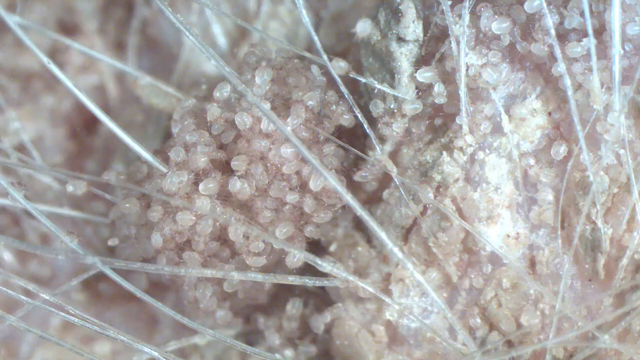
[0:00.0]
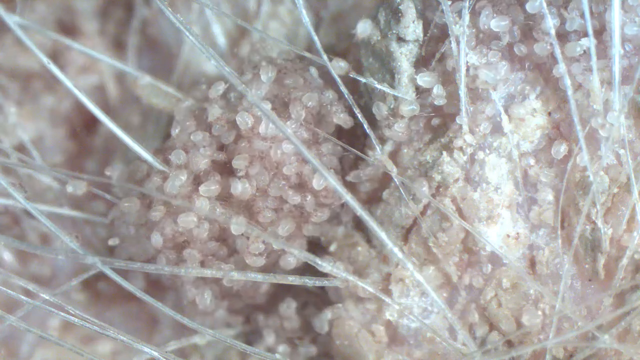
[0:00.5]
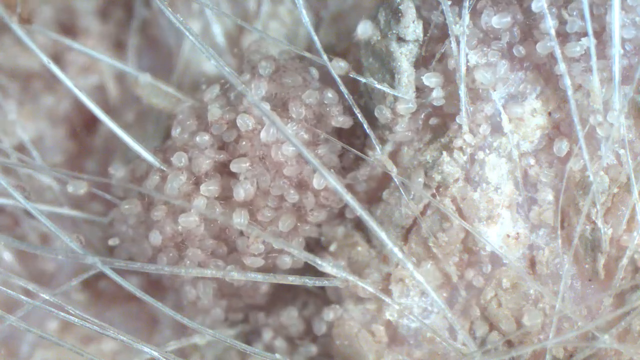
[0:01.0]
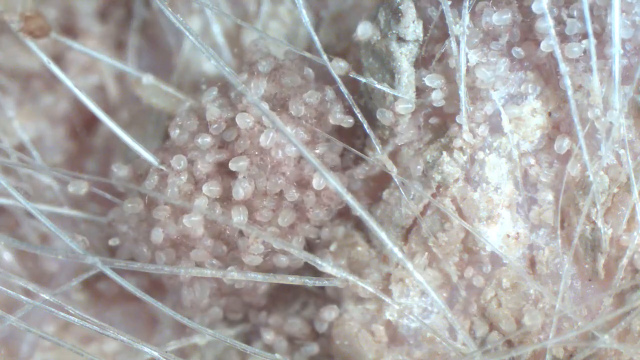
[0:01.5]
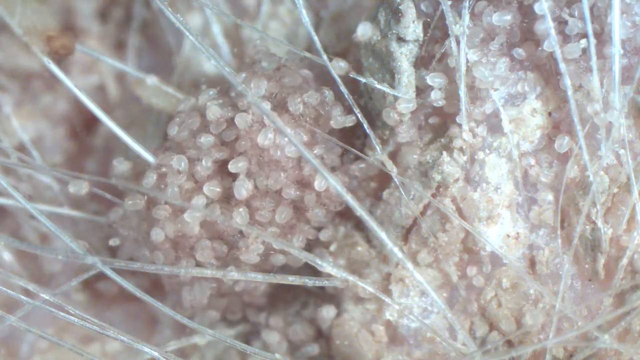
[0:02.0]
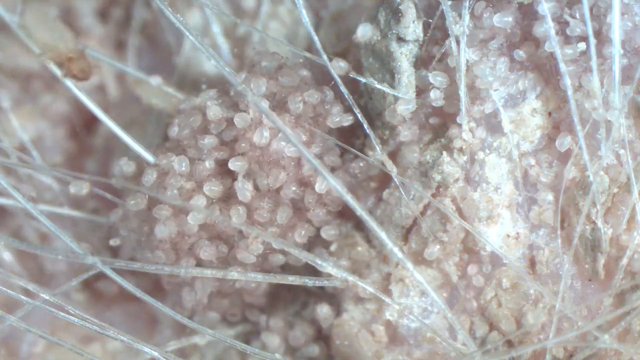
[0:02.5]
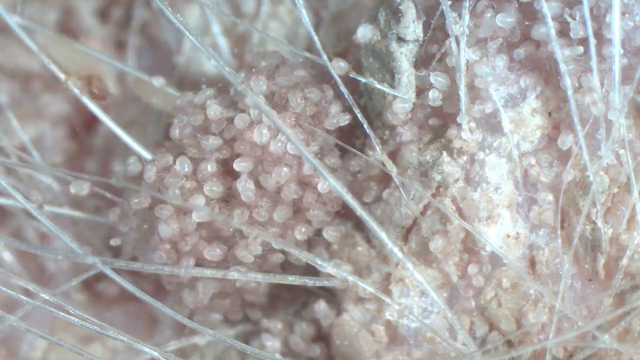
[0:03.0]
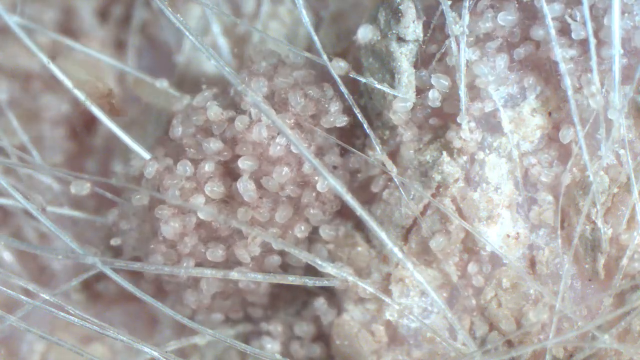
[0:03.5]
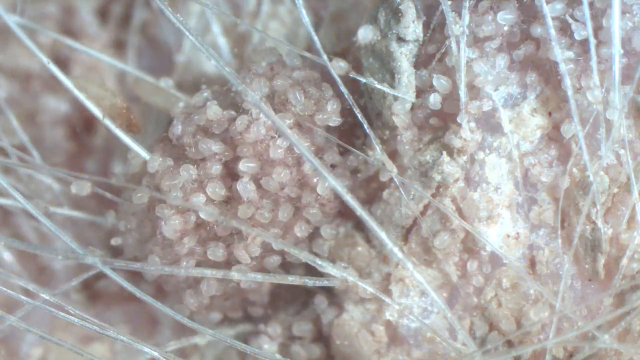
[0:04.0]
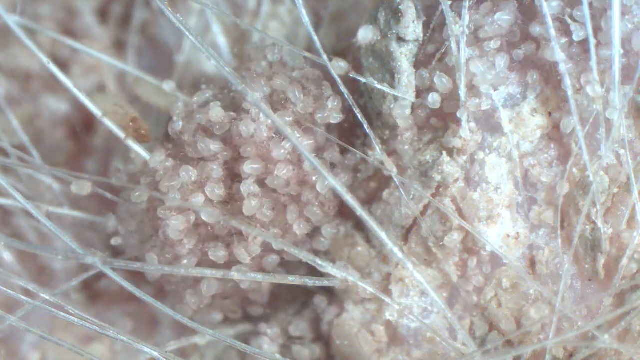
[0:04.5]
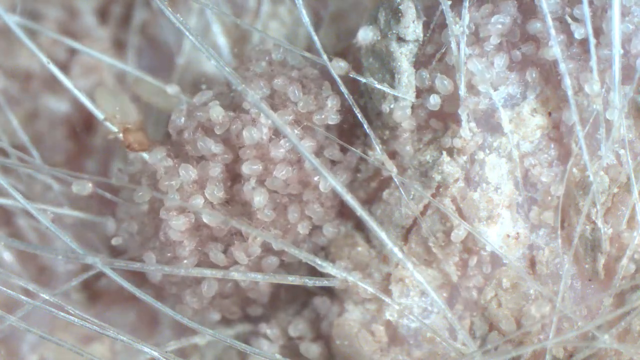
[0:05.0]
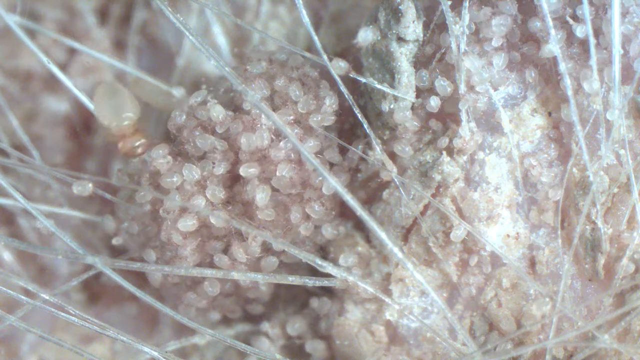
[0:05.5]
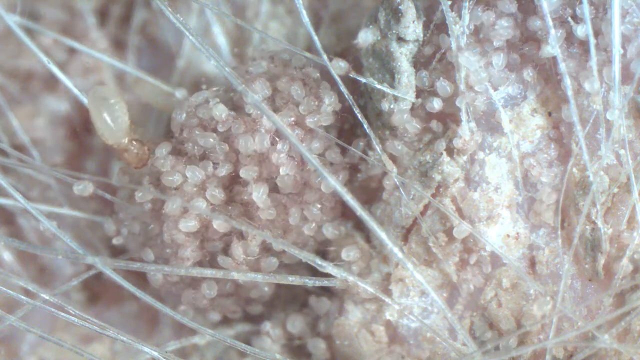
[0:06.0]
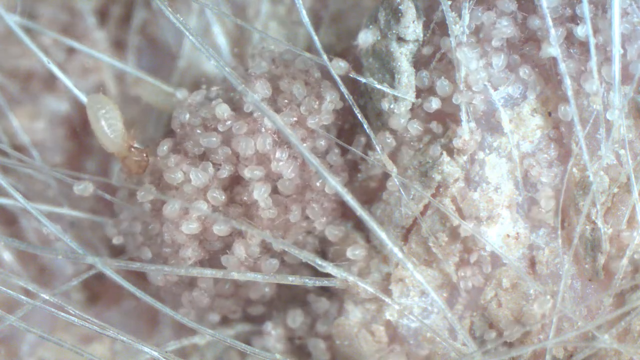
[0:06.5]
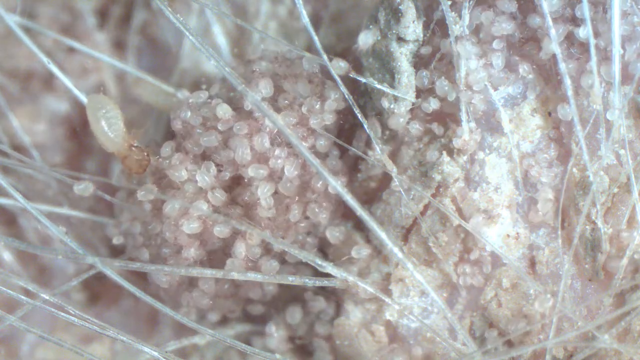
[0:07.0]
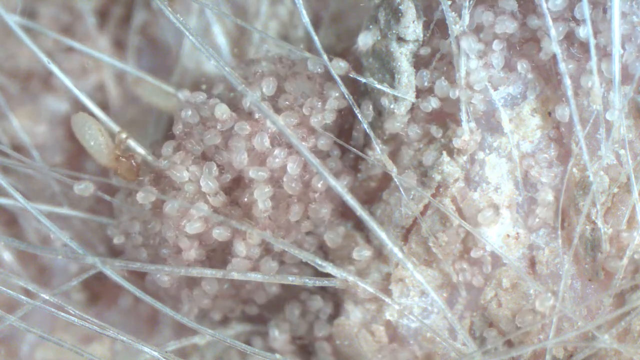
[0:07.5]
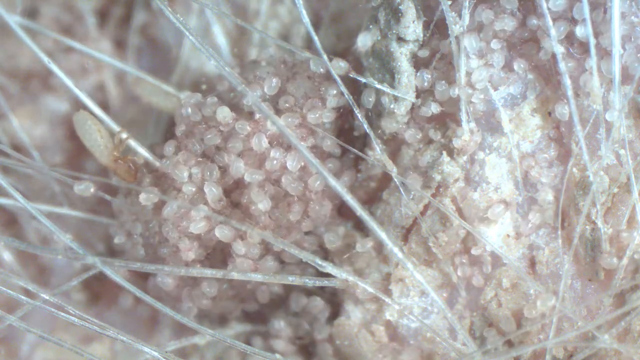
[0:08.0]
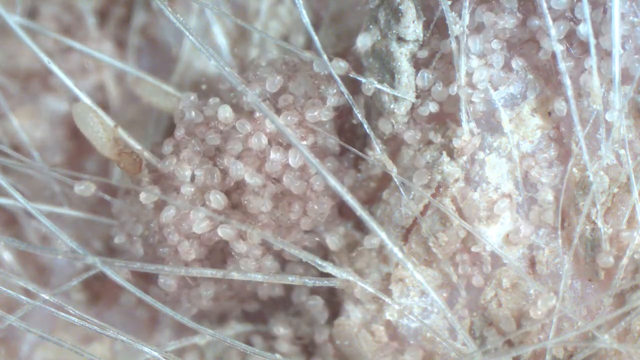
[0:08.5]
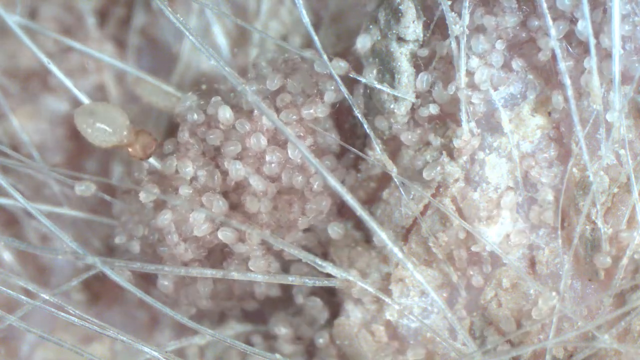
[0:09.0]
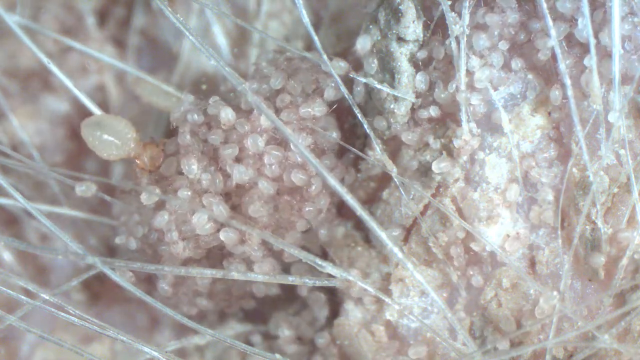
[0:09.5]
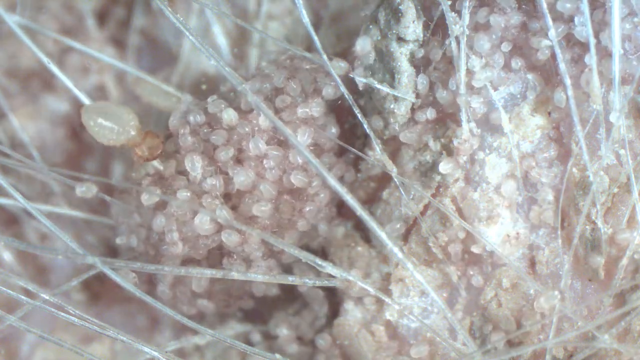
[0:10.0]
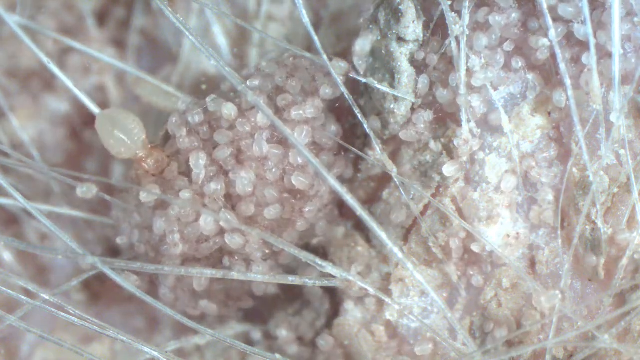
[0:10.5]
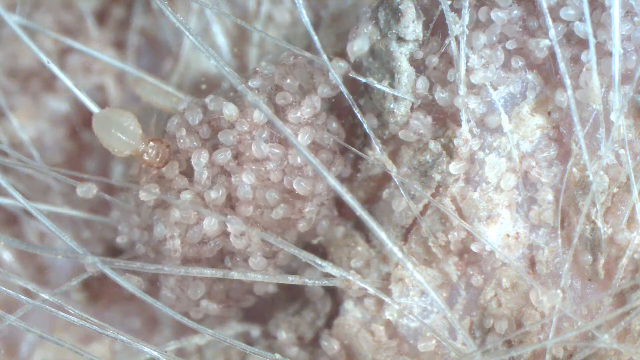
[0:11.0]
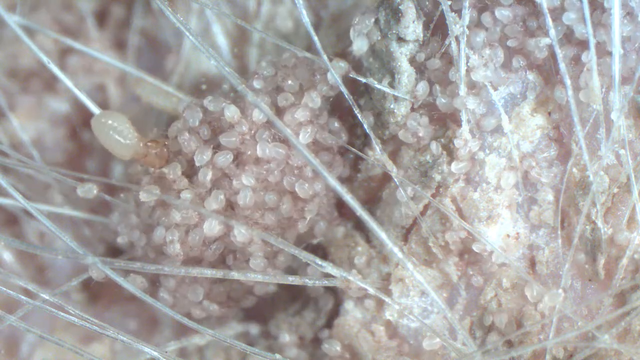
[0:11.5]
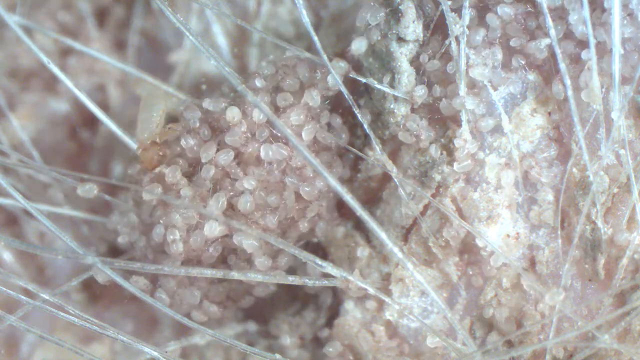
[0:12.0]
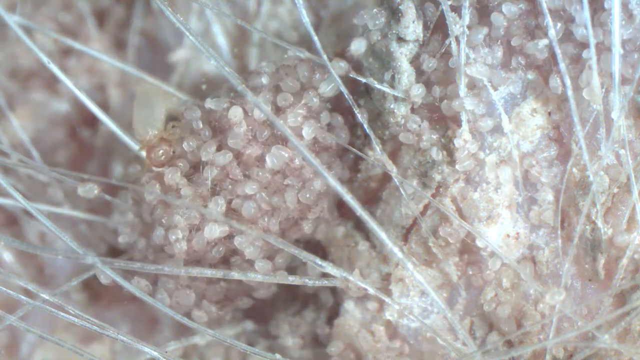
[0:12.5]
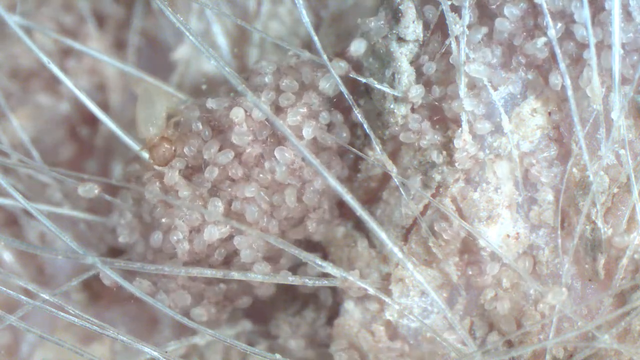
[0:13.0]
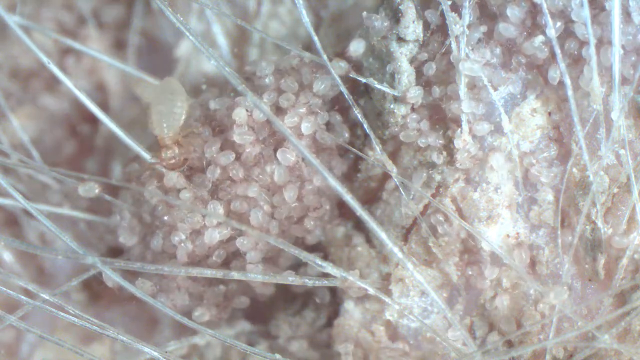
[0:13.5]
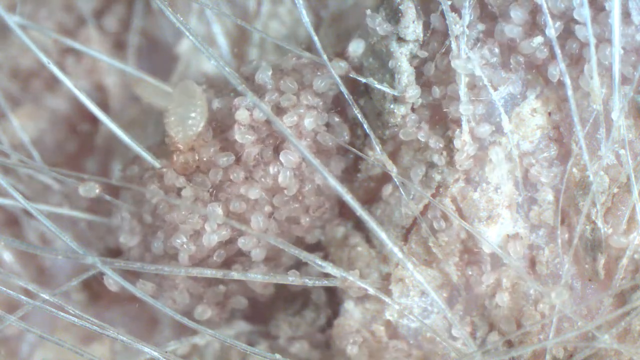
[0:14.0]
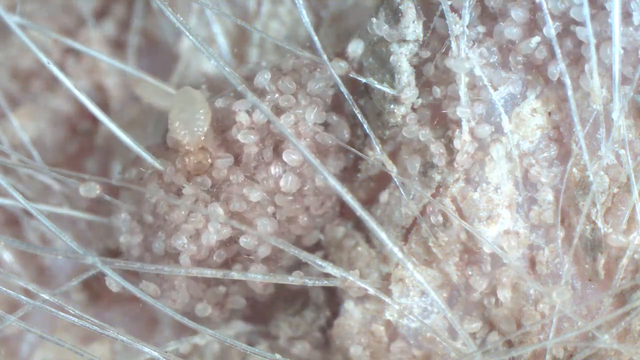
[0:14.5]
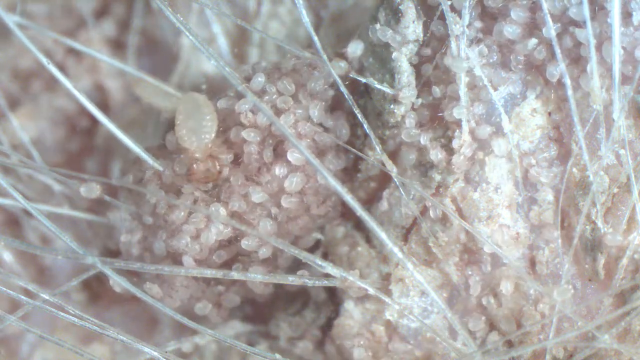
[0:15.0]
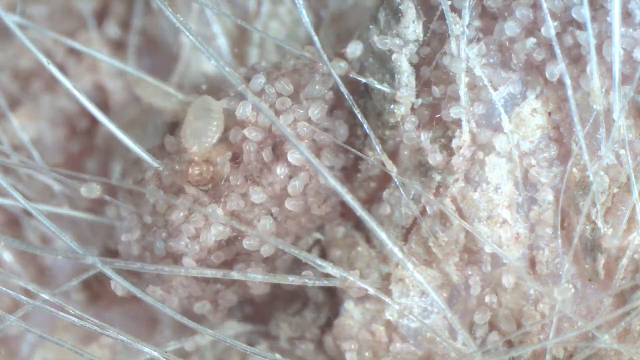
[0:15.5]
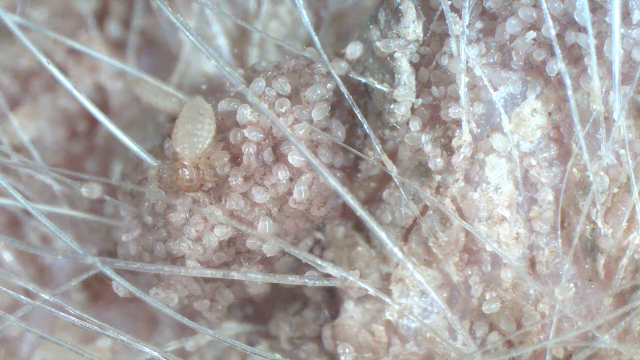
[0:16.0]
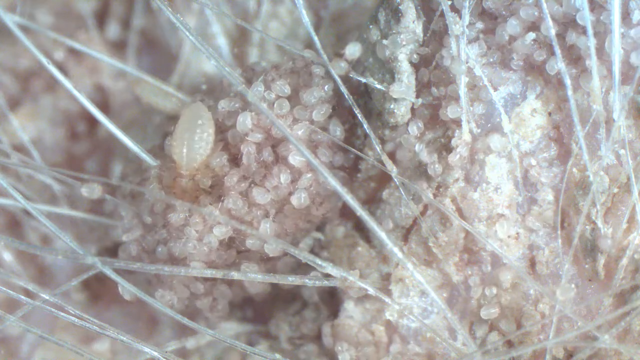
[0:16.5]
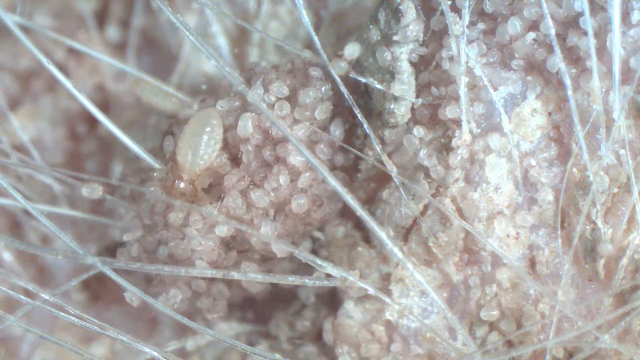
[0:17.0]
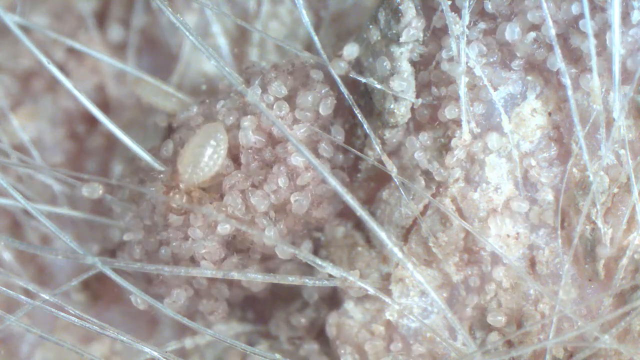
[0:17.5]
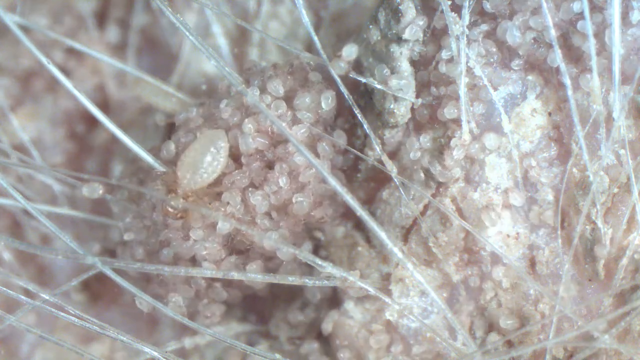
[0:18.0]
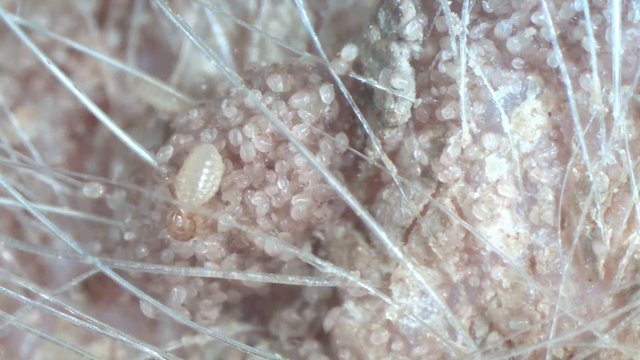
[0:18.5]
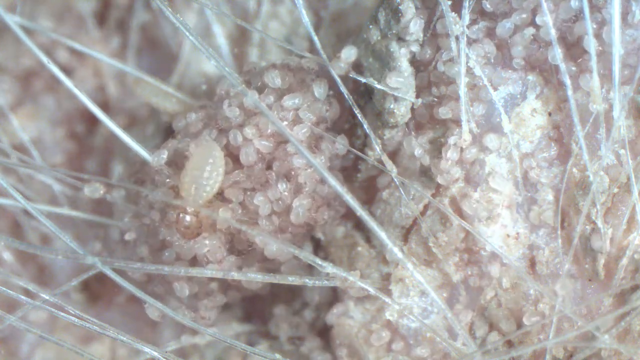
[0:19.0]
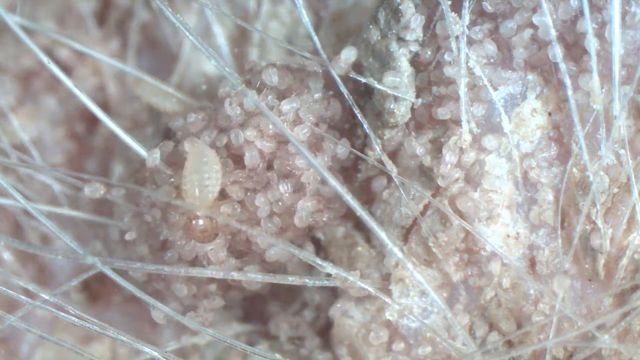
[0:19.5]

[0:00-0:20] This nature video shows many bugs, most of them in a large circle or bundle, seemingly gathering toward the middle of the screen on the right side. A larger version of the same bug has a white, clearish, flat oval body. It is unclear whether a head is attached to that body or whether the bug is carrying something in its mouth; whatever is in the head or mouth area is a light, clear orange colour. The video has only a few colours, mostly a translucent white, clear pearl with hints of pink or brown. In the upper center of the screen is a grayish object that almost looks like it might be a rock.